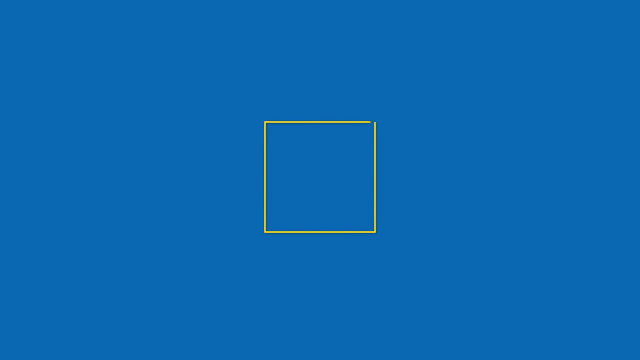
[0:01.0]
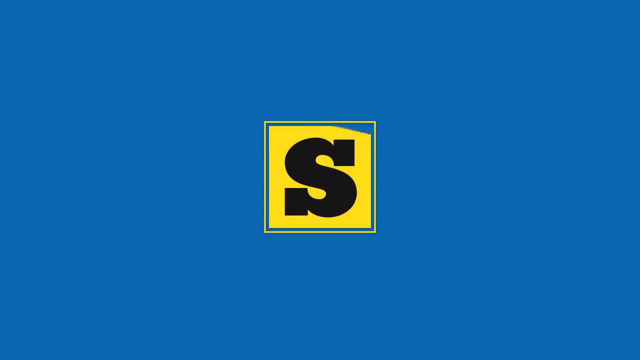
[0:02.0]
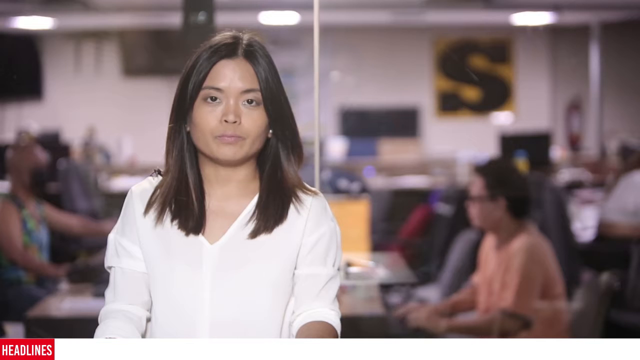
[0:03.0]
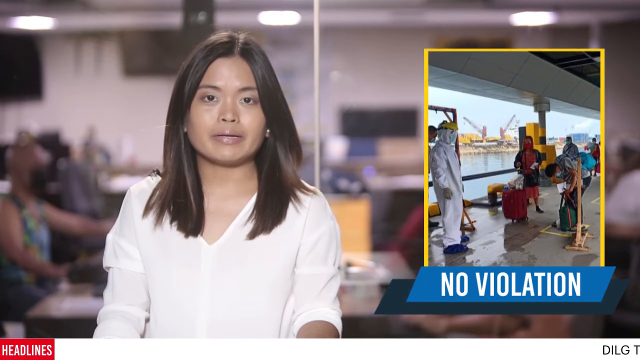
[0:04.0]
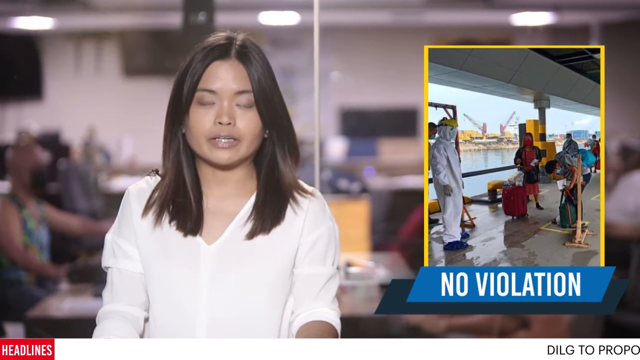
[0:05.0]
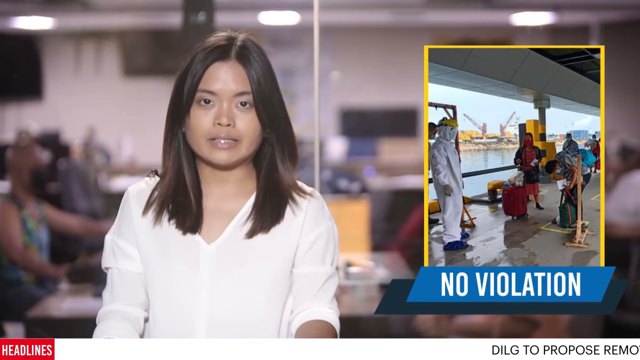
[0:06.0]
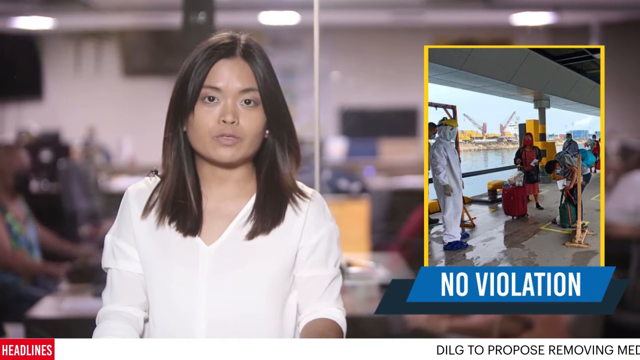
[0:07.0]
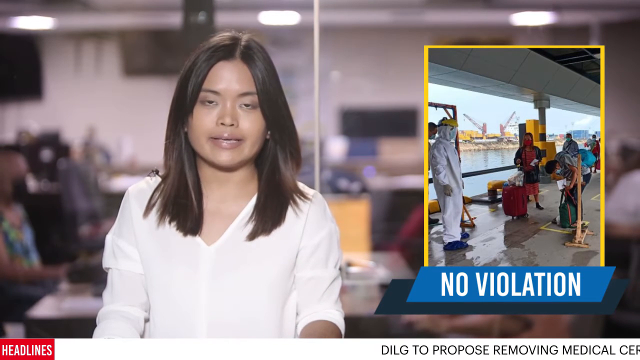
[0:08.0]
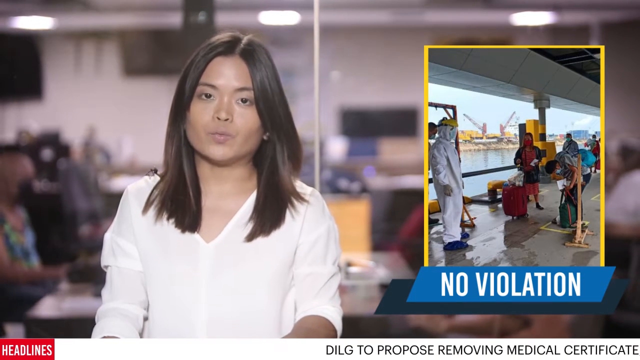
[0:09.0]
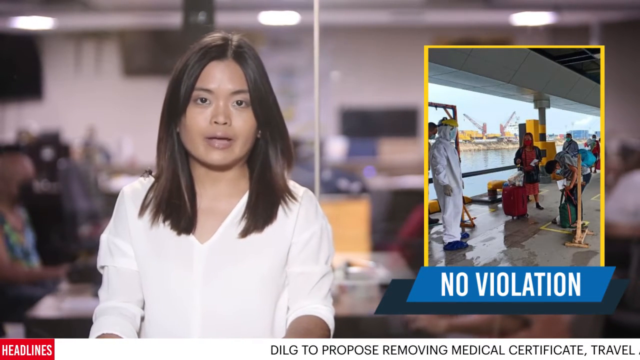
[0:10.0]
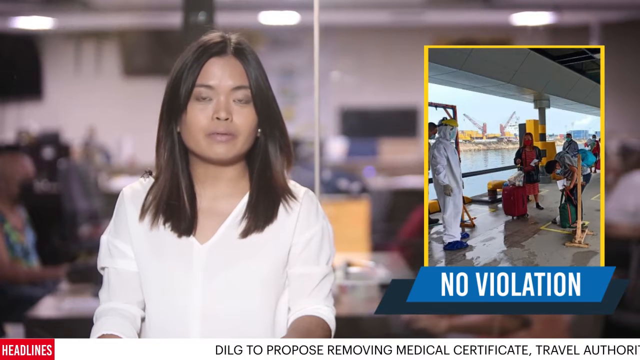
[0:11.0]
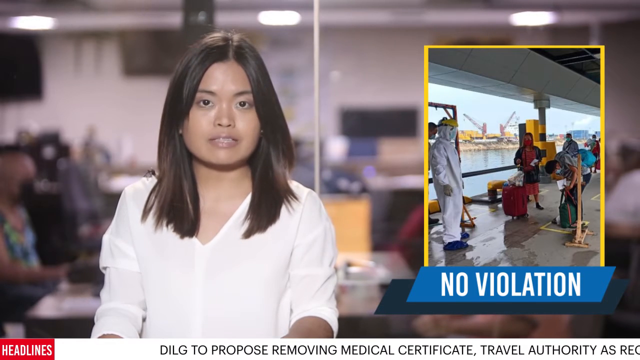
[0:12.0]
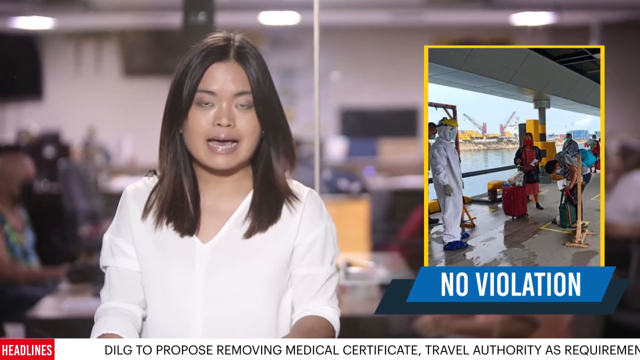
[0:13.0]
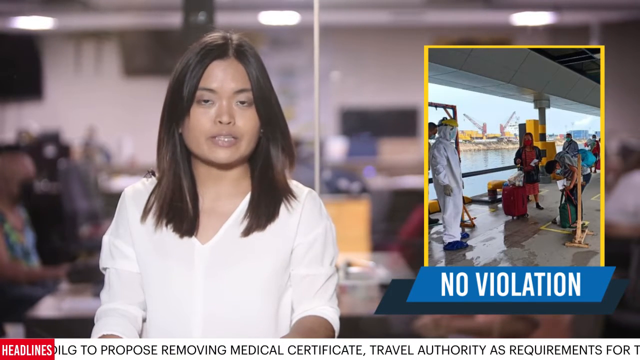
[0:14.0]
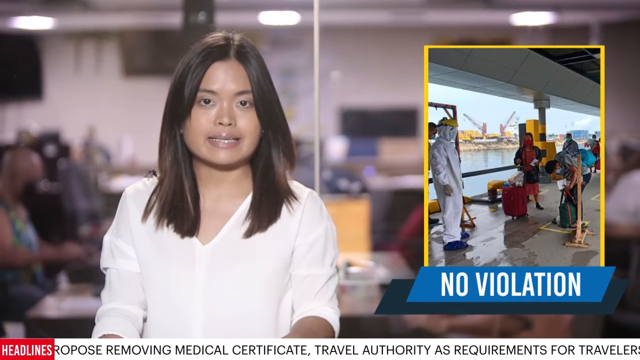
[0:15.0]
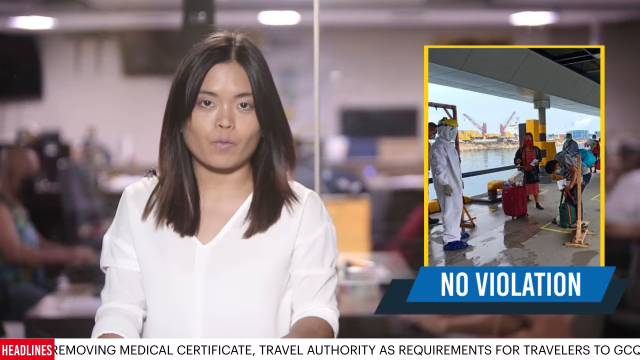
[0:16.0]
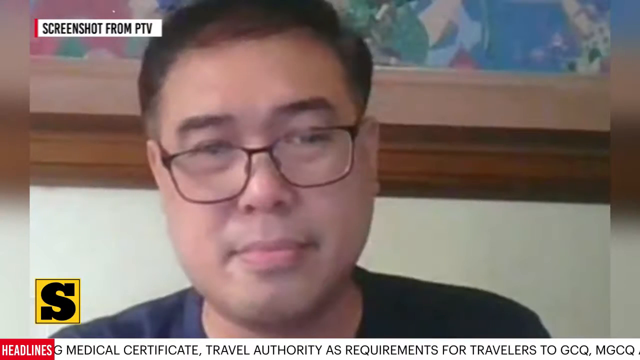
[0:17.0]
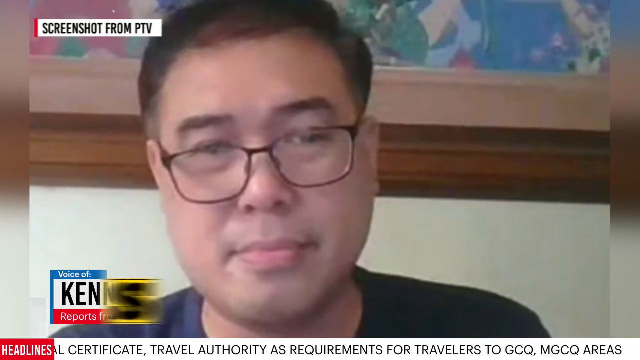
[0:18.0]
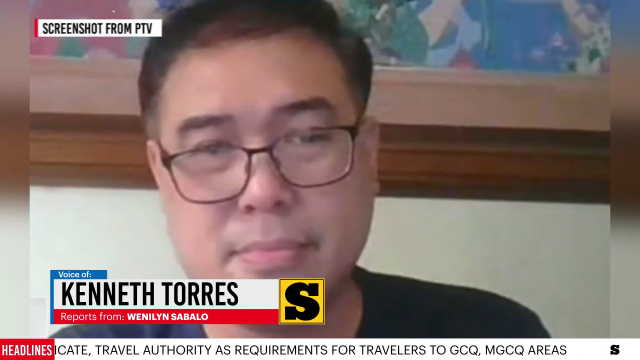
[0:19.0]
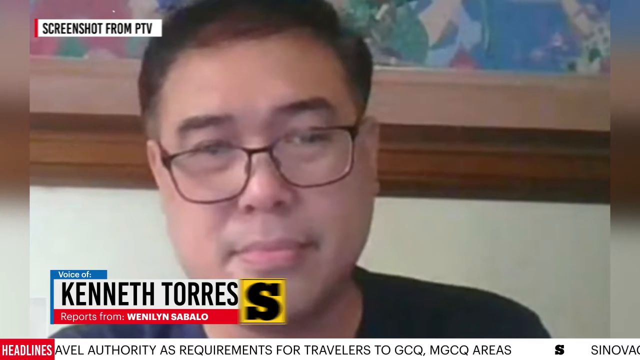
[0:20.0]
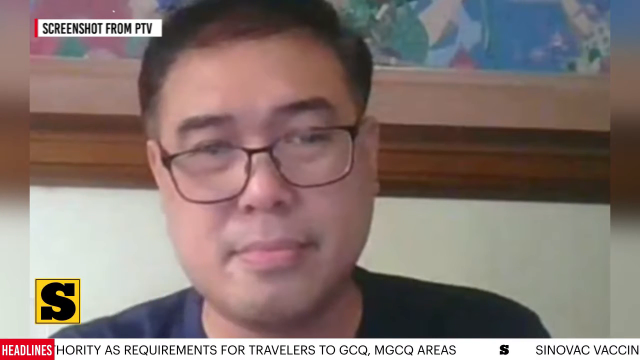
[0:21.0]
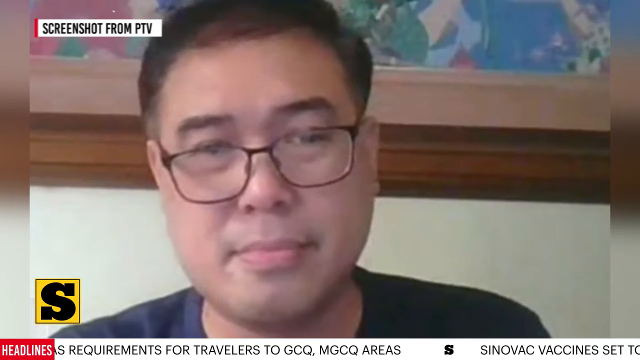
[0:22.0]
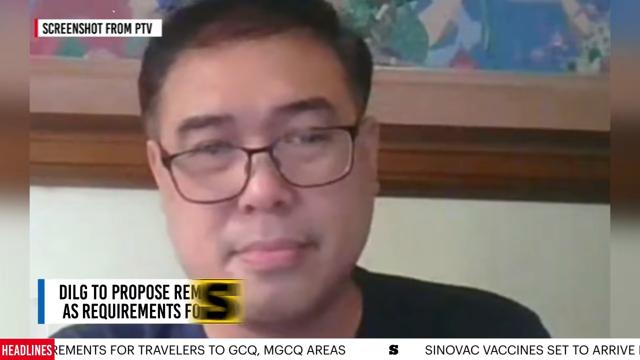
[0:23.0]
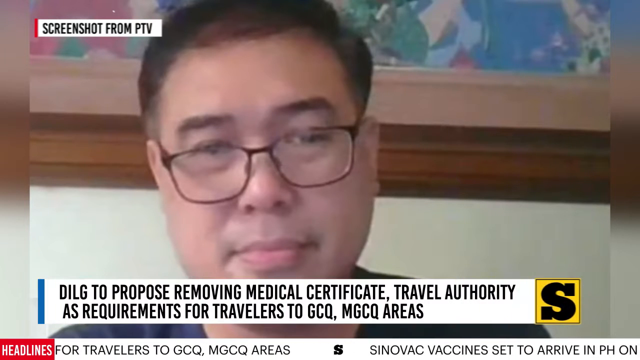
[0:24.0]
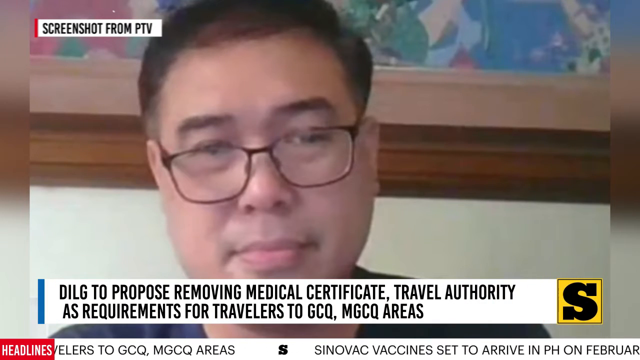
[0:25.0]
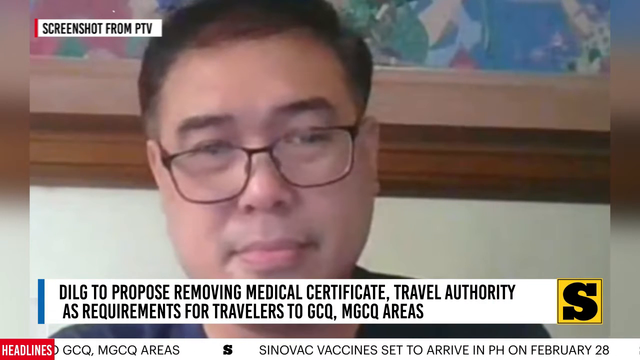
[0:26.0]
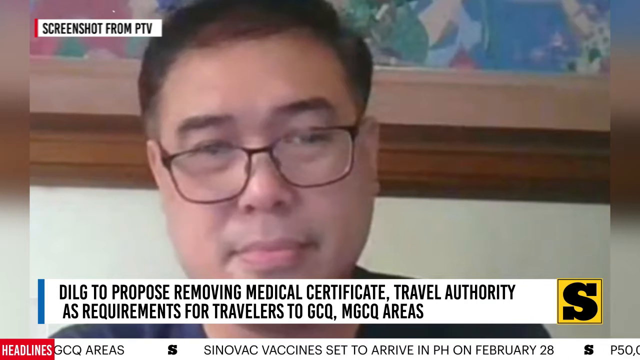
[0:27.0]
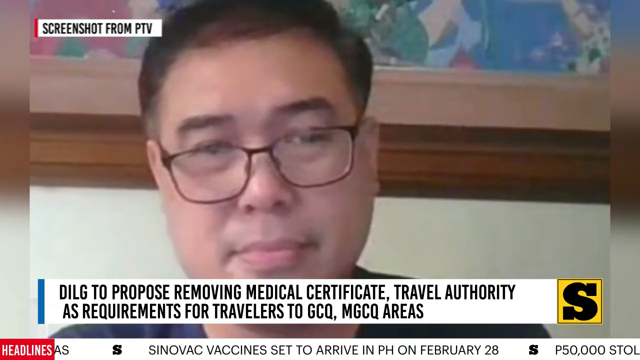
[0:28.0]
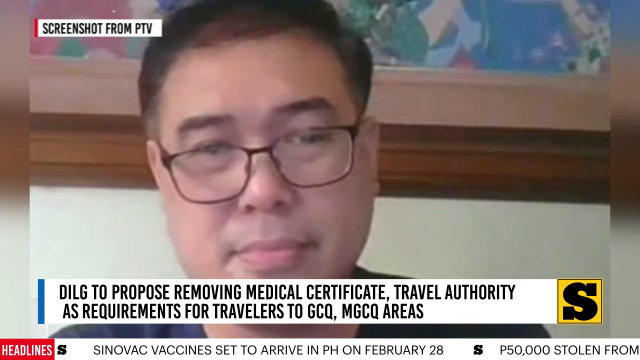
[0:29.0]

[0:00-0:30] The news video opens with credits on a blue background showing a black S in the middle inside a yellow box; the box then fills in with yellow. The view pans to the newsroom, where a news anchor appears. She looks South Asian and has very straight, shoulder-length black hair parted in the middle. Behind her is a newsroom with people in office chairs looking at laptops and desktops. She begins talking, and the topic appears to involve travel or labor. A photo insert at the top to her right carries the title "no violation" and shows people next to a dock or construction site near a body of water, seemingly under a bridge. A person on the left wears a hazmat suit, and the rest of the people wear masks and have luggage. The view then pans to a screenshot from PTV showing another Asian man in his 40s wearing eyeglasses, apparently named Kenneth Torres. A banner then appears at the bottom reading "DILG to propose removing medical certificate travel authorities as requirements for travelers to GCQ and MGCQ areas".